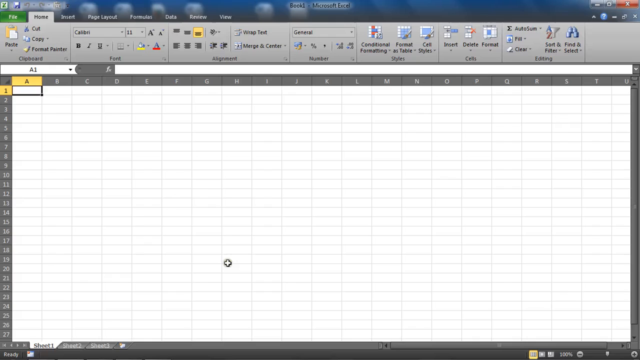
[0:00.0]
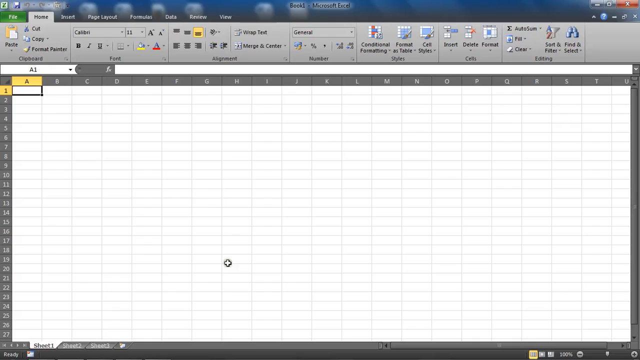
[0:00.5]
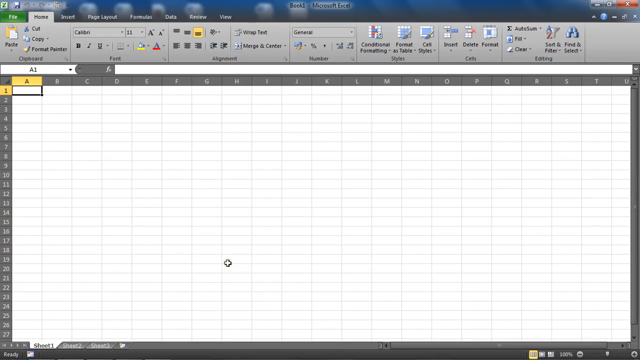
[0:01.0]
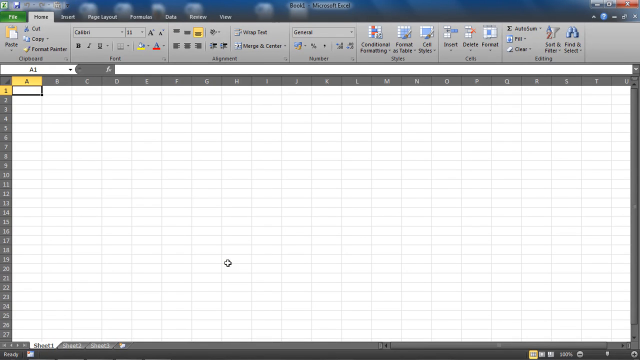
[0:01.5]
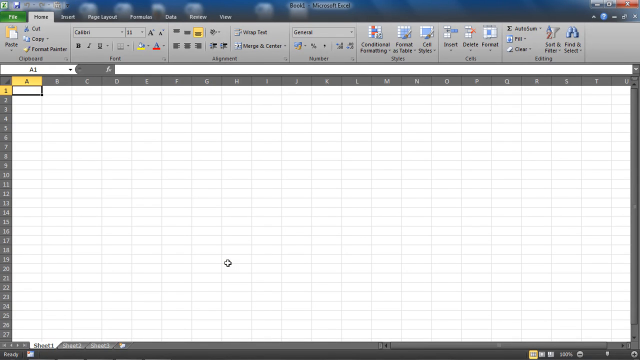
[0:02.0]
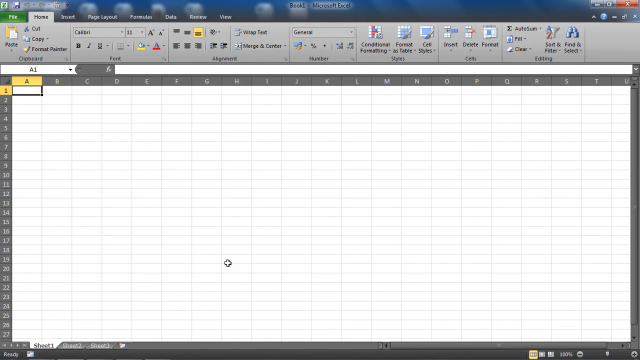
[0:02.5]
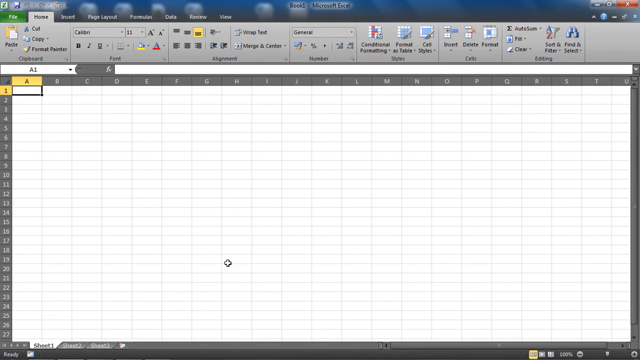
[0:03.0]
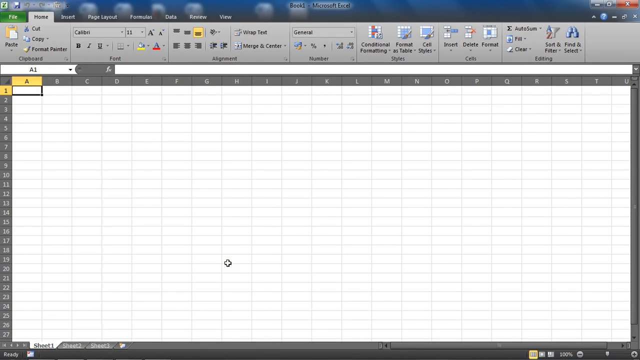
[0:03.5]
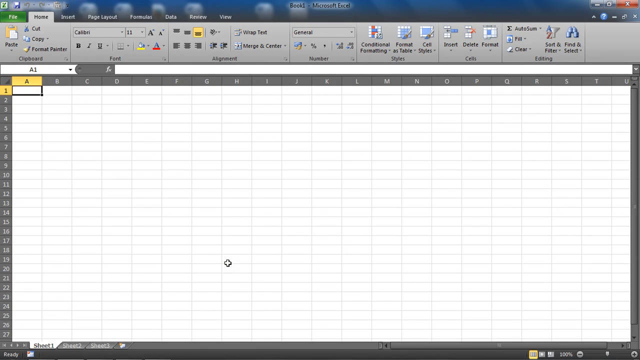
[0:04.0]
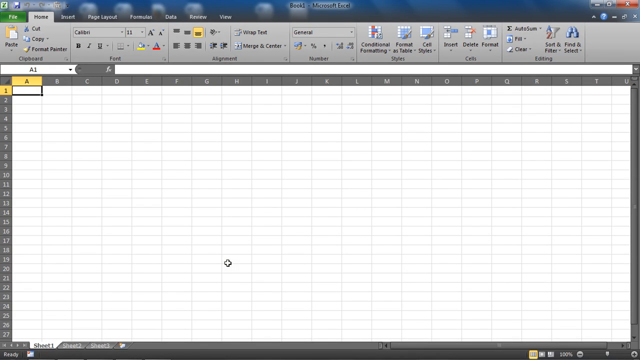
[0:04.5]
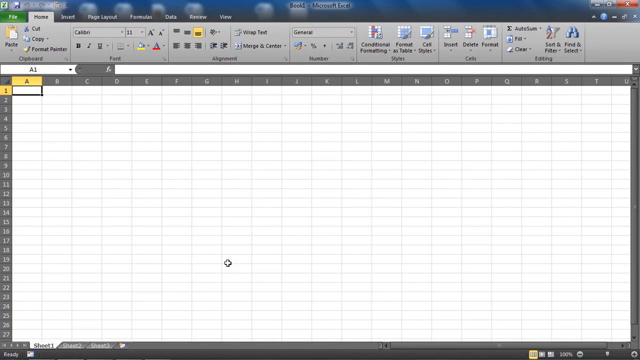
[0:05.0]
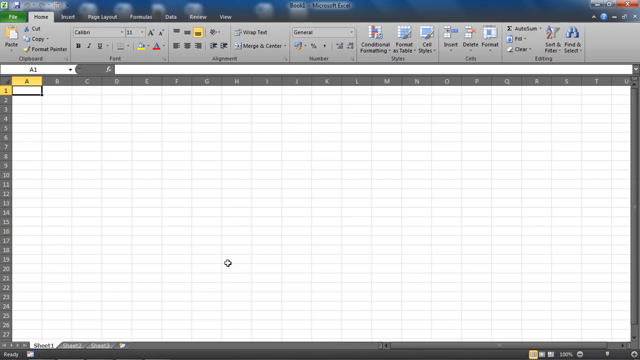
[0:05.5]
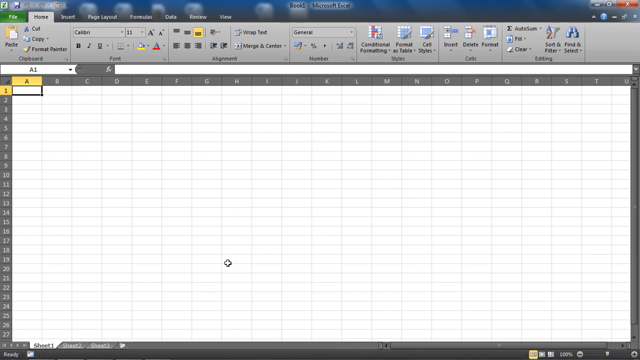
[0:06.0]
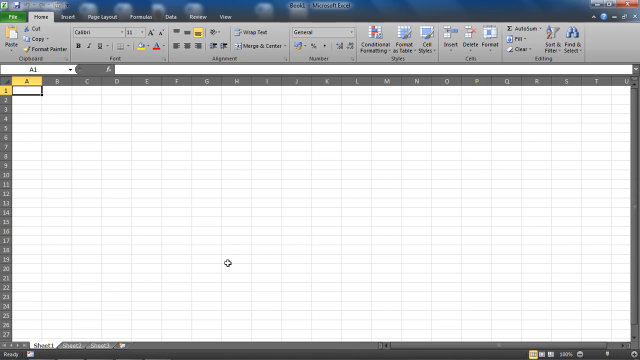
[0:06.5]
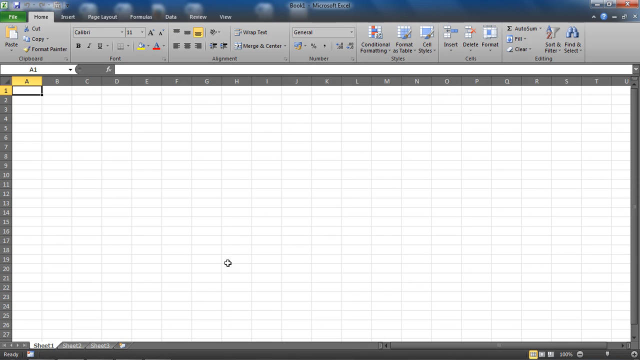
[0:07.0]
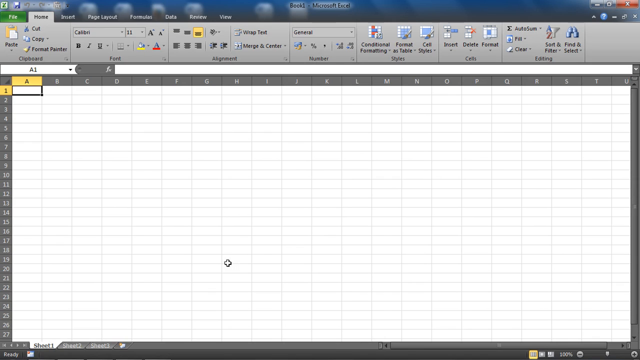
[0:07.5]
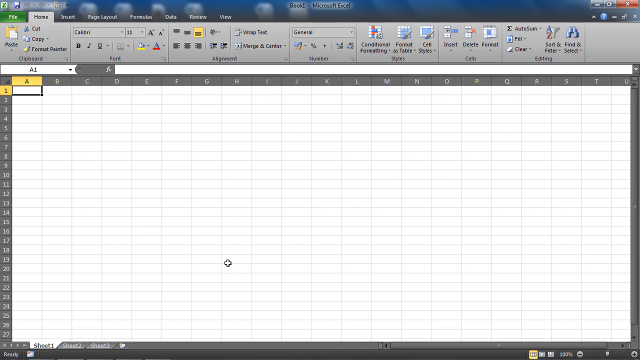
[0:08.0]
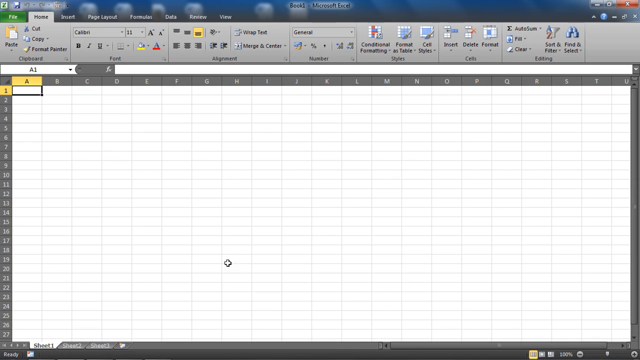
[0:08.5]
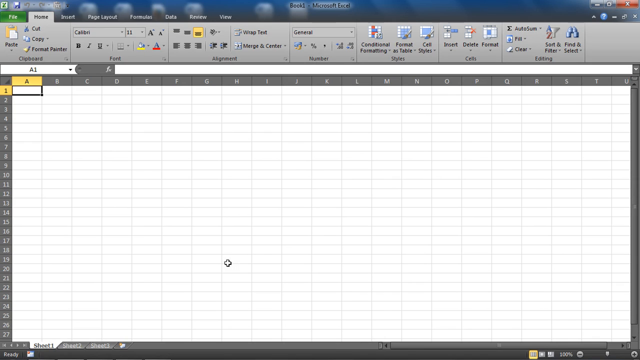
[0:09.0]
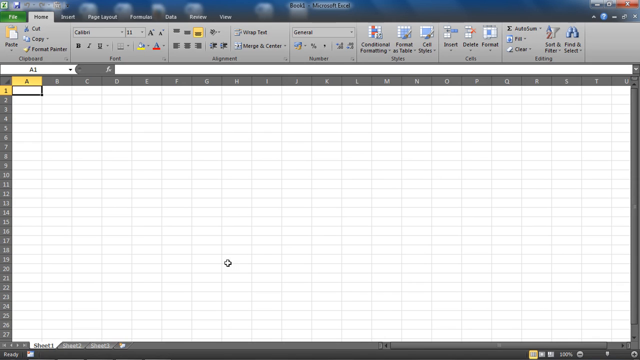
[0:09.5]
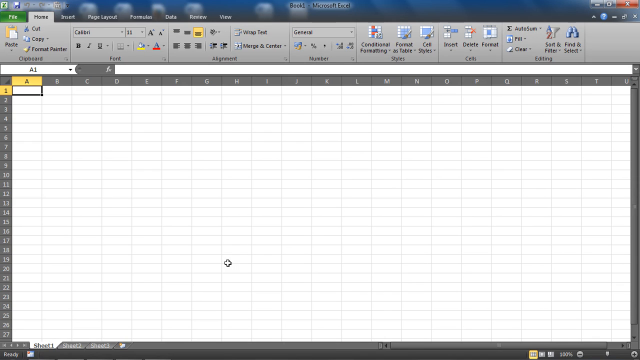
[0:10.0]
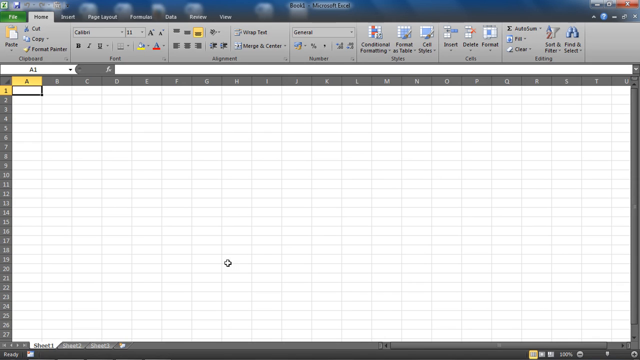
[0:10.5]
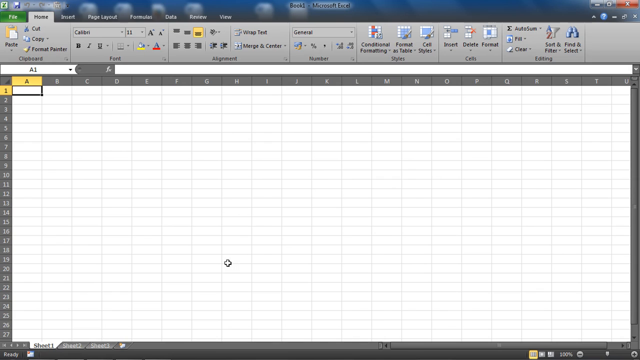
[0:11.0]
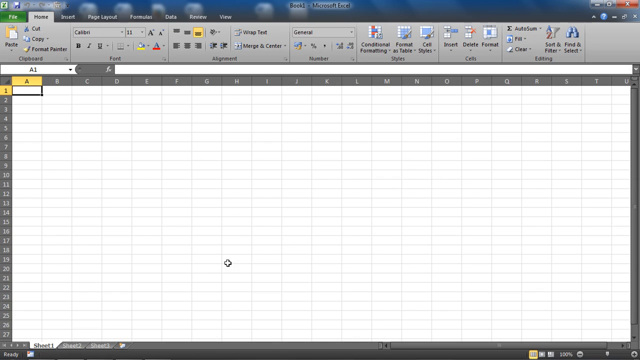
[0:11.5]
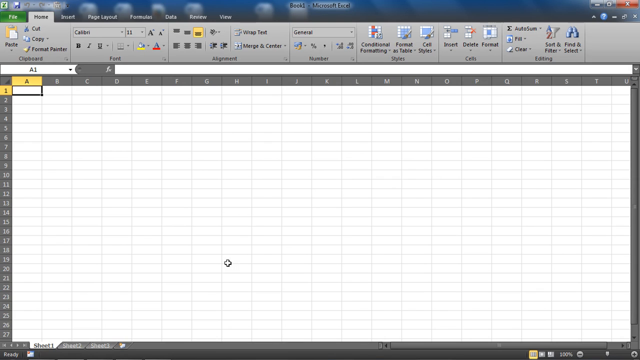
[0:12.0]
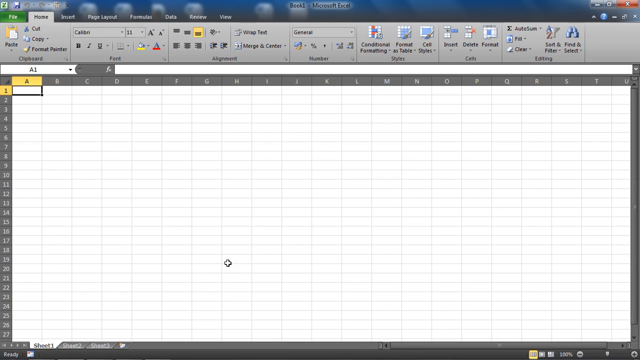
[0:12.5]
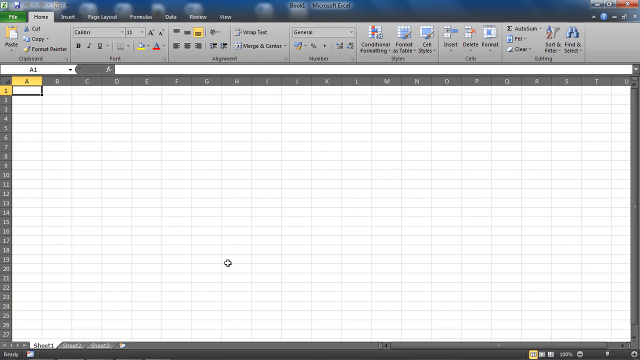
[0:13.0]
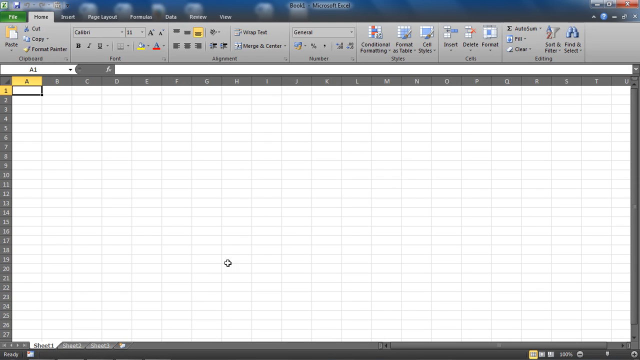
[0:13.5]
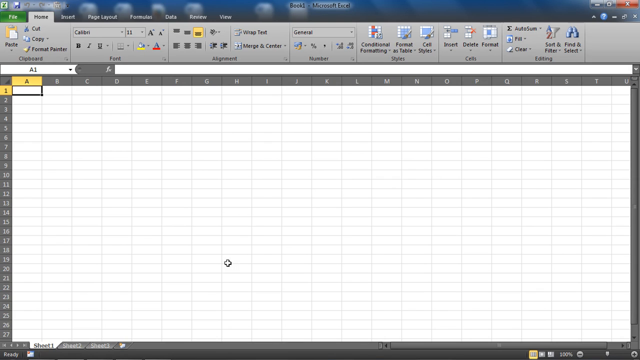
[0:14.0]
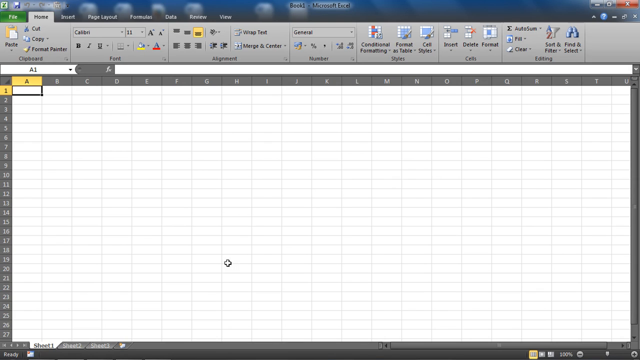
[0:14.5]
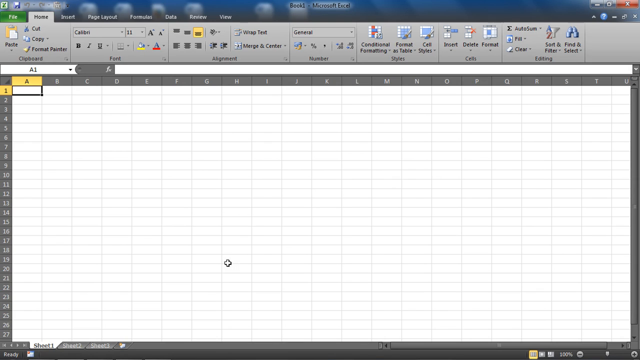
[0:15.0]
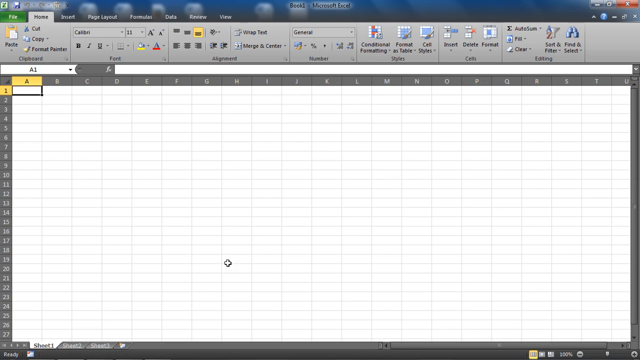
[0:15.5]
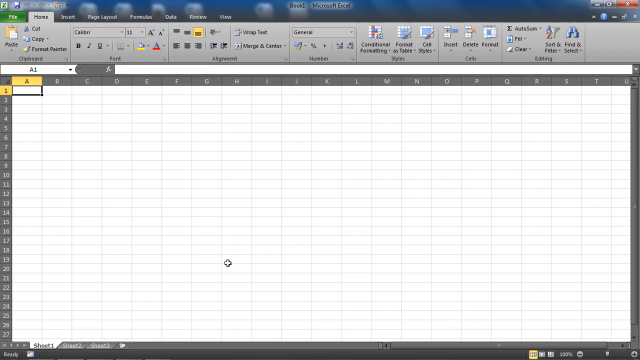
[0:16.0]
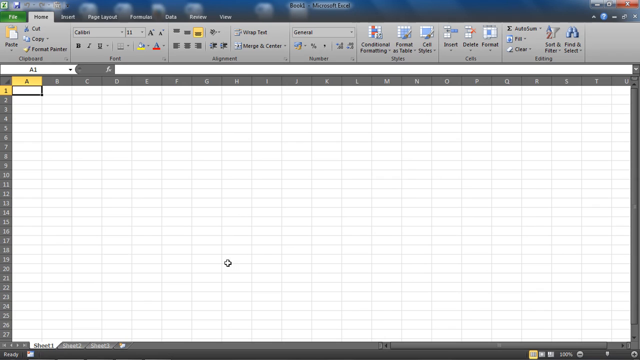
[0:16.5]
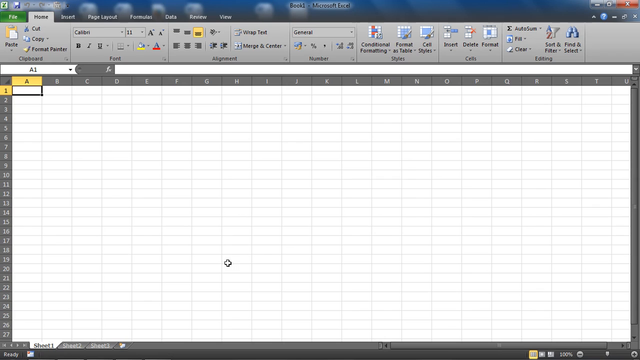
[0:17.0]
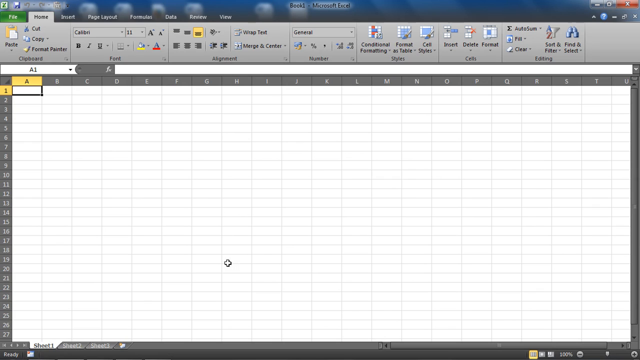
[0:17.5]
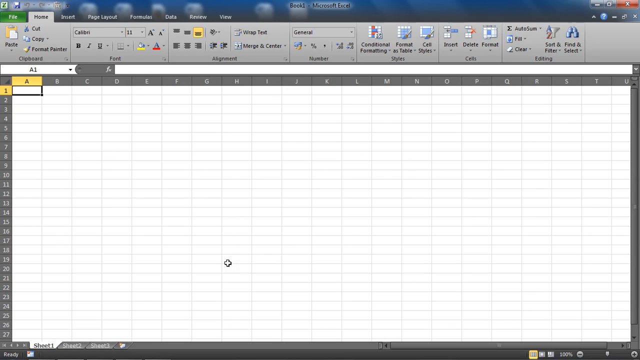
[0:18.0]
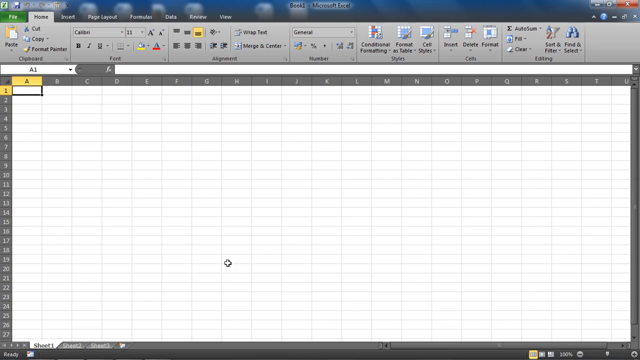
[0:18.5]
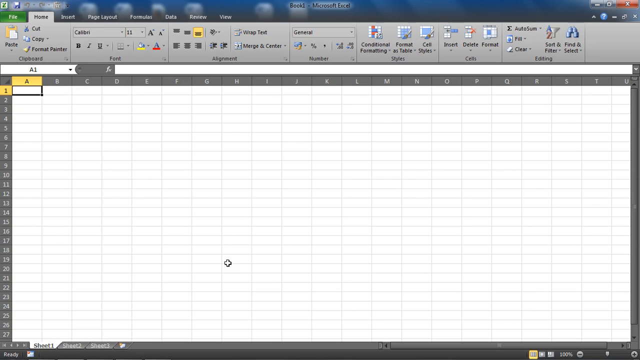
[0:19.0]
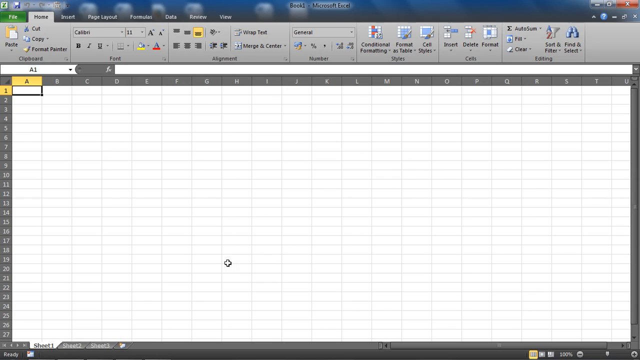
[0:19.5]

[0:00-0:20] An empty Excel file fills the opening screen. It probably goes down about 30 rows, and the column letters across the top run from A to U. The selection is in A1 in the upper left, which is highlighted: the A at the top is yellow, the 1 on the left is yellow, and there is a box around that cell, while everything else is kind of grayish. The toolbar at the top holds loads of items; it looks like the second tab, "Home", is highlighted, so it lists the font size and all kinds of formatting options. A cross cursor is near the middle of the screen, probably around H20, and it is not moving. There is no motion at all on the Excel file. Below the file at the very bottom, Sheet 1 is highlighted in white, while Sheet 2 and Sheet 3 are kind of grayed. The settings at the top look pretty standard. At the very top is a blue field reading "Book 1 Microsoft Excel", which is kind of hard to read.